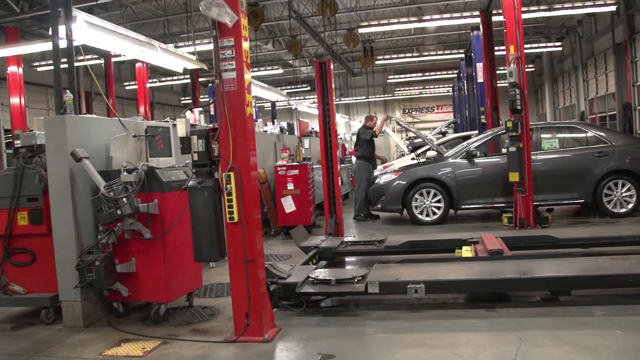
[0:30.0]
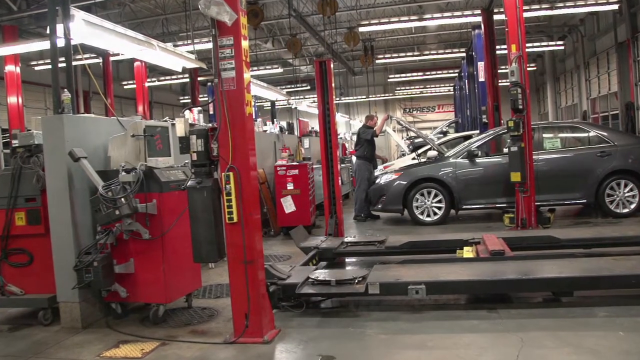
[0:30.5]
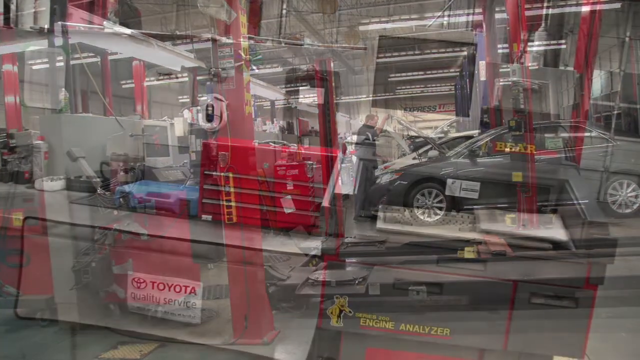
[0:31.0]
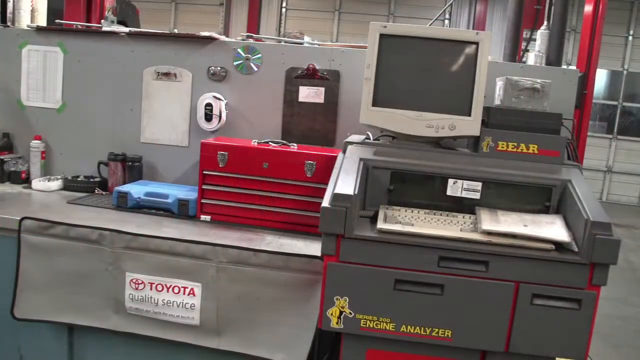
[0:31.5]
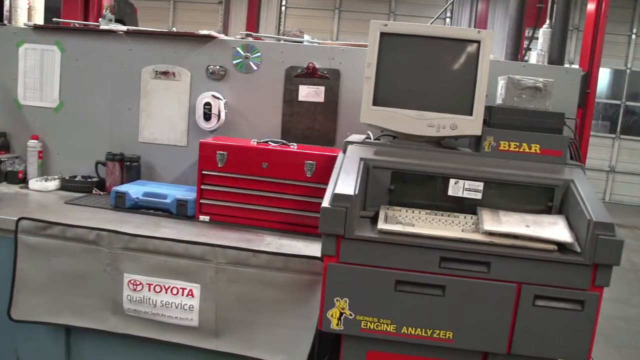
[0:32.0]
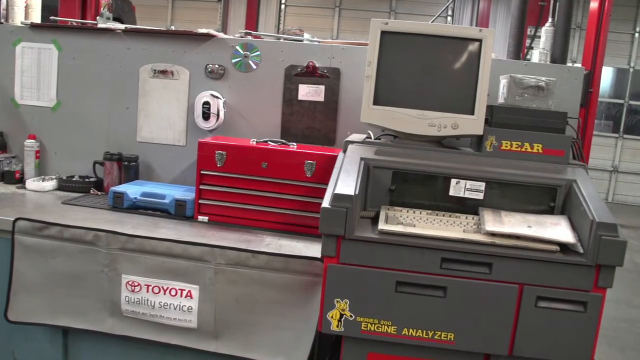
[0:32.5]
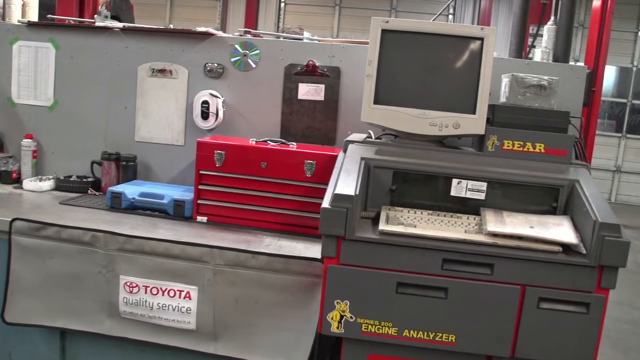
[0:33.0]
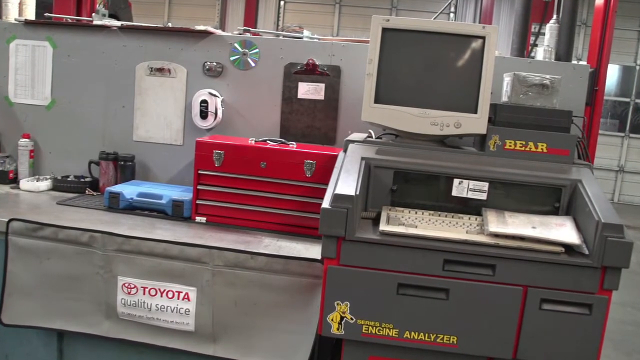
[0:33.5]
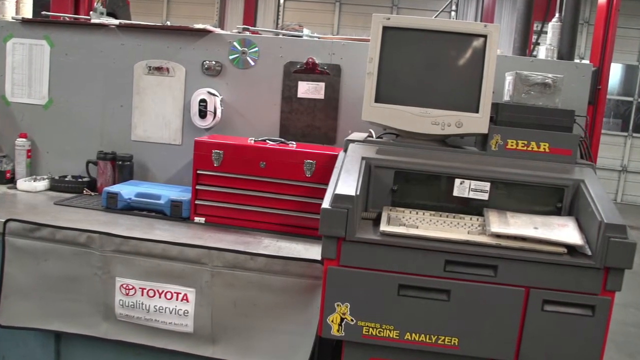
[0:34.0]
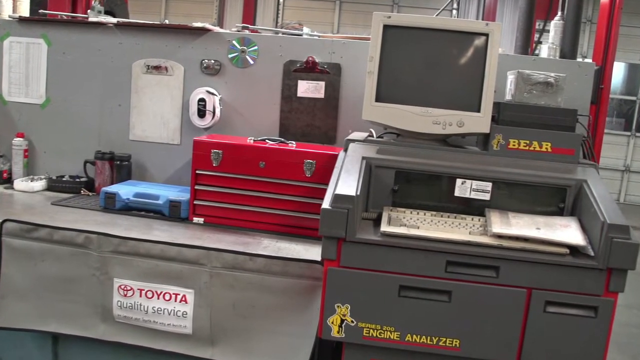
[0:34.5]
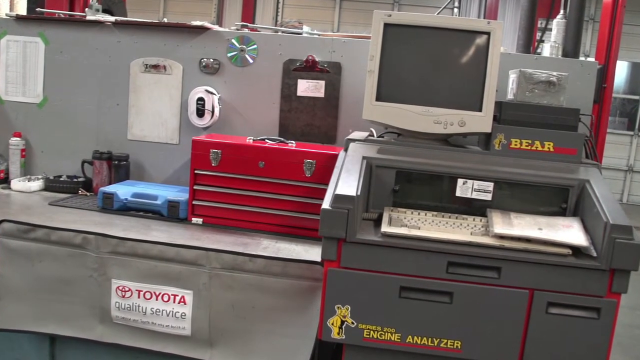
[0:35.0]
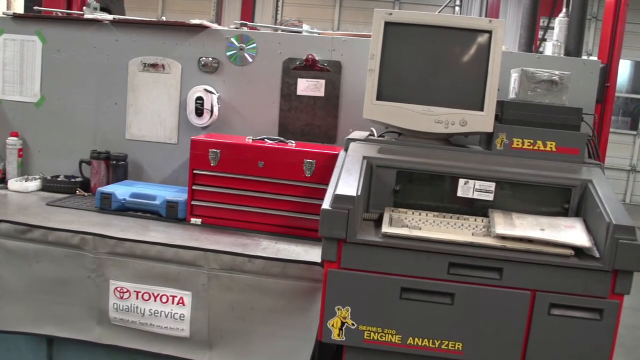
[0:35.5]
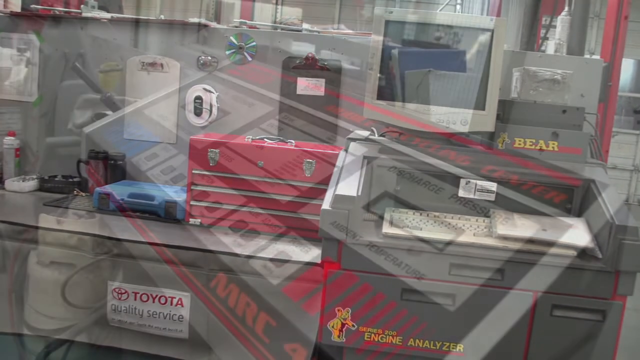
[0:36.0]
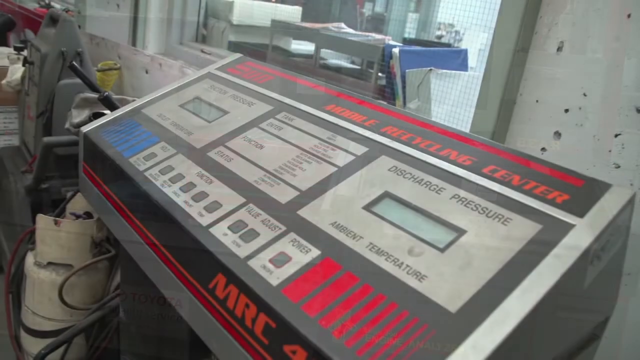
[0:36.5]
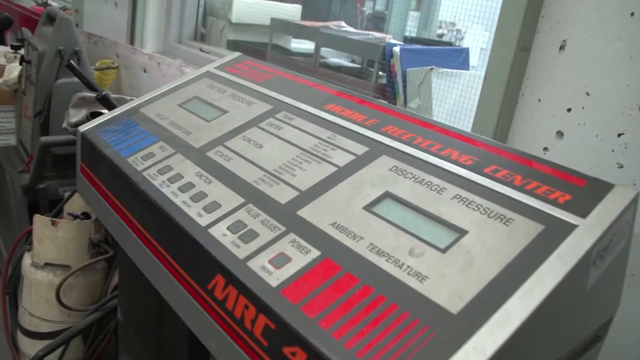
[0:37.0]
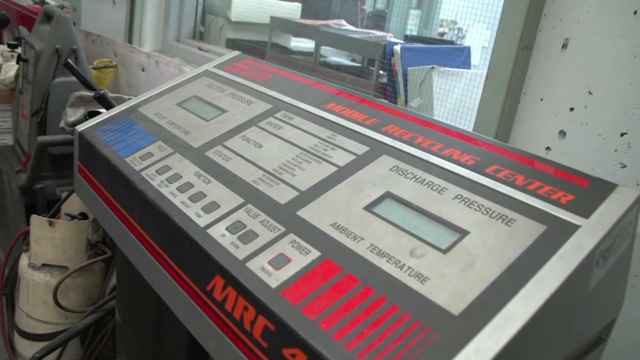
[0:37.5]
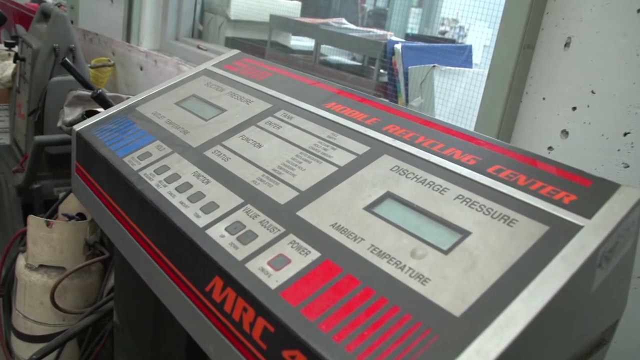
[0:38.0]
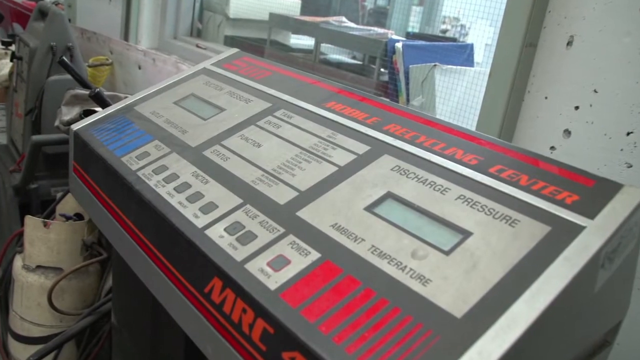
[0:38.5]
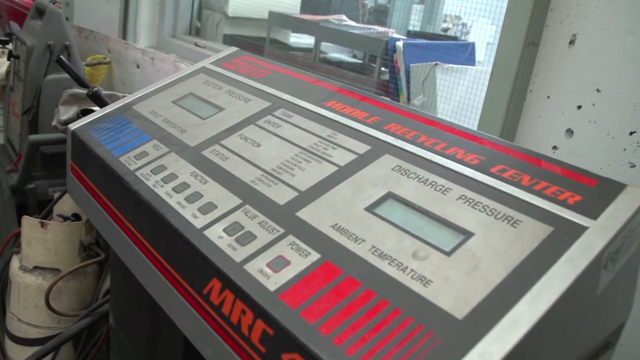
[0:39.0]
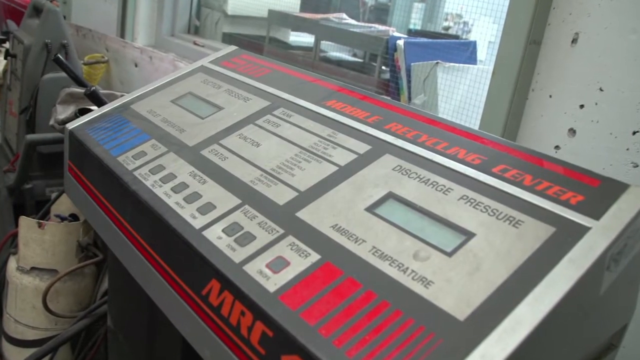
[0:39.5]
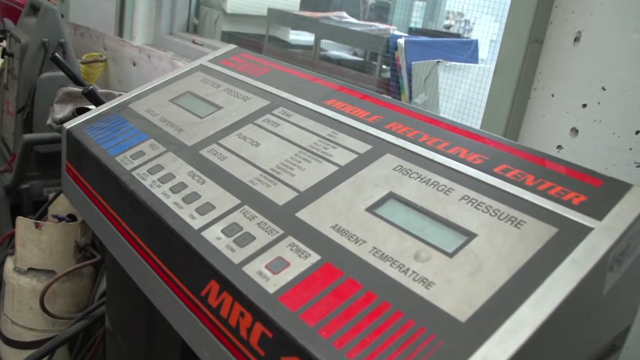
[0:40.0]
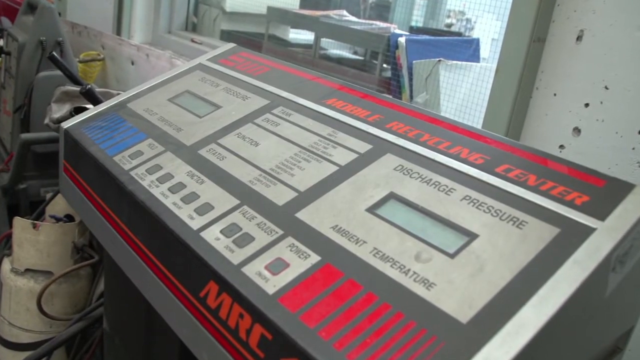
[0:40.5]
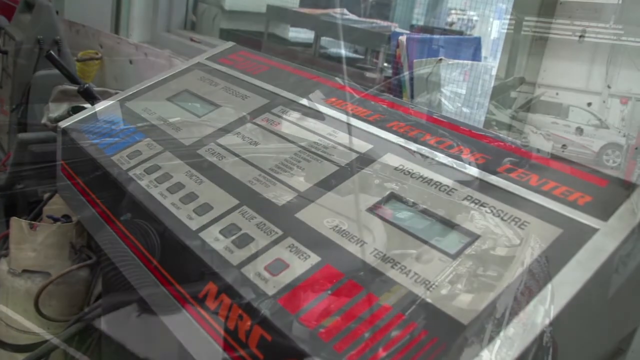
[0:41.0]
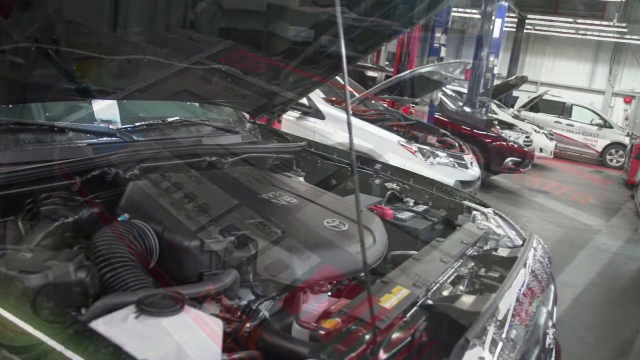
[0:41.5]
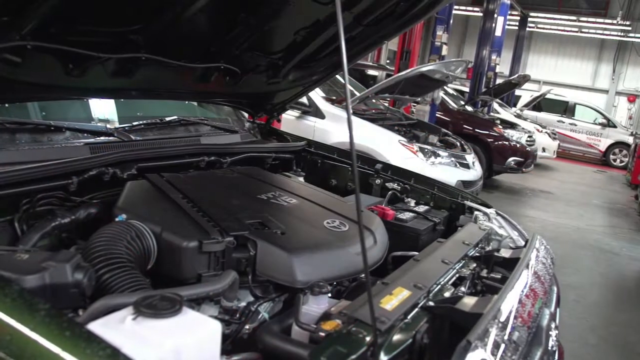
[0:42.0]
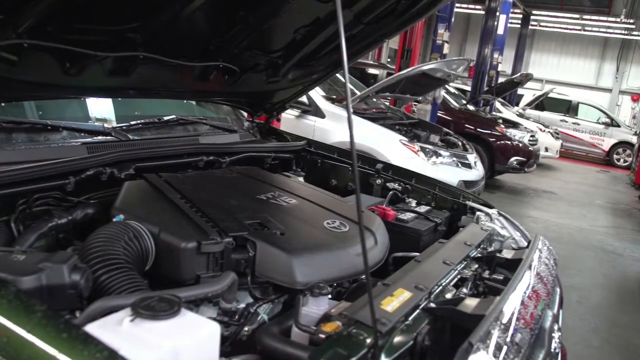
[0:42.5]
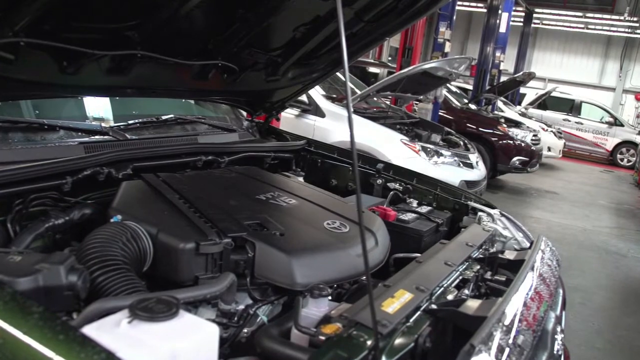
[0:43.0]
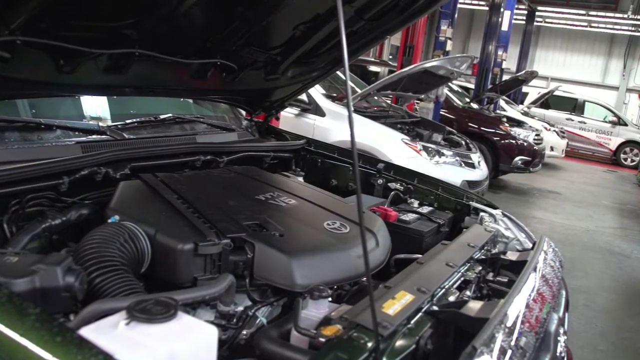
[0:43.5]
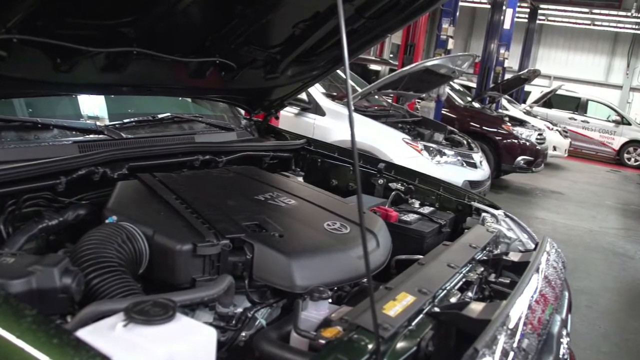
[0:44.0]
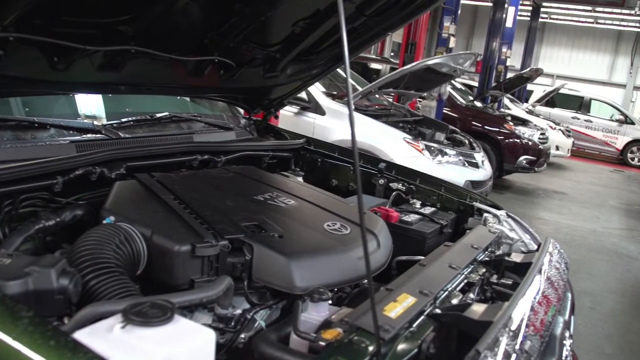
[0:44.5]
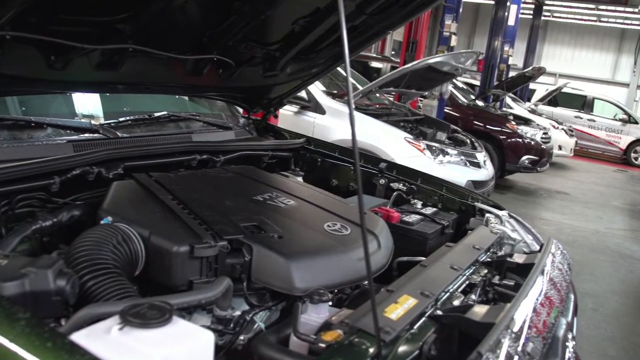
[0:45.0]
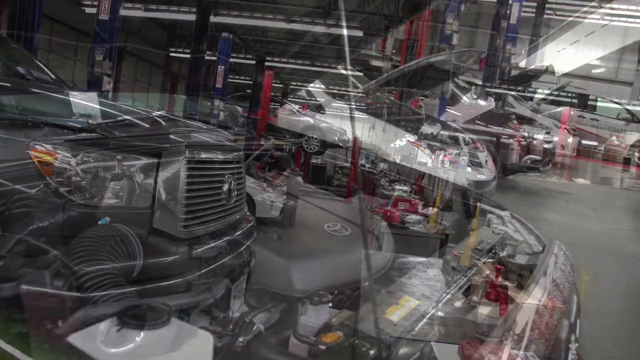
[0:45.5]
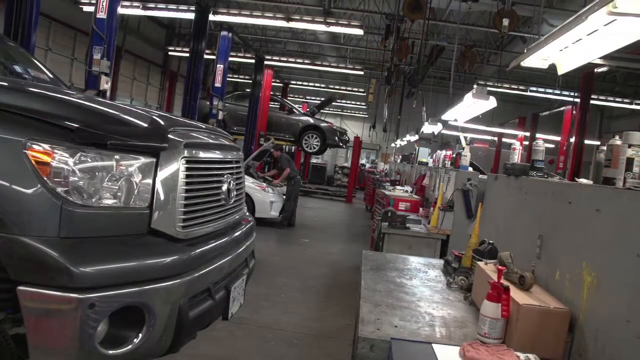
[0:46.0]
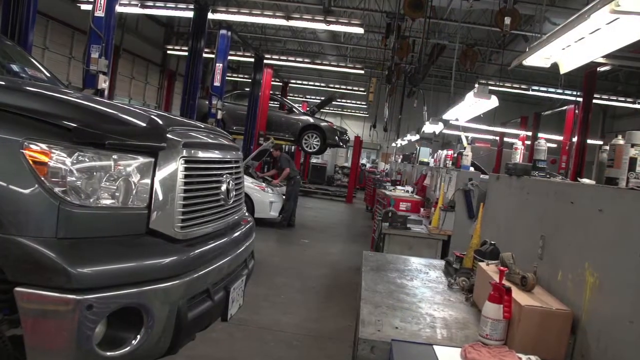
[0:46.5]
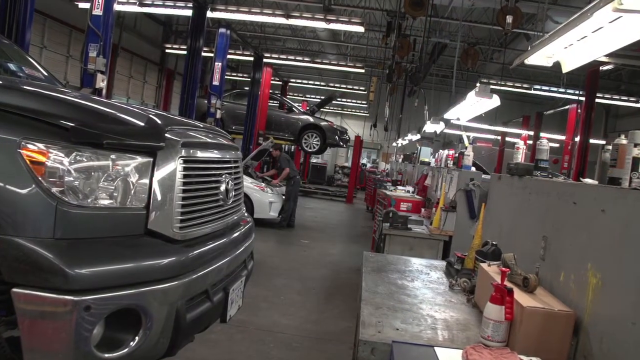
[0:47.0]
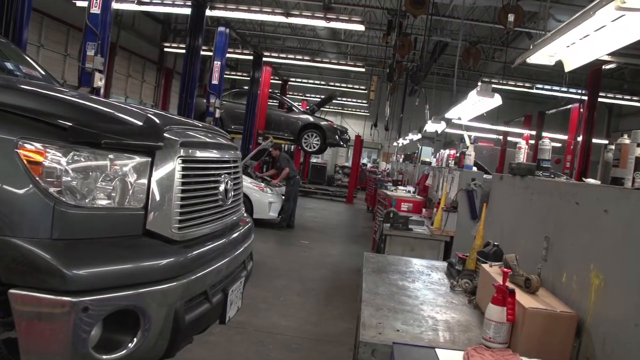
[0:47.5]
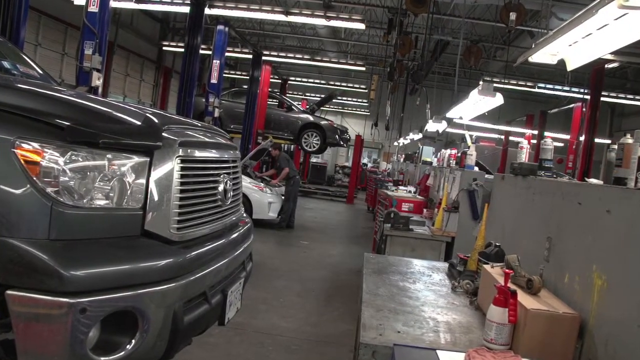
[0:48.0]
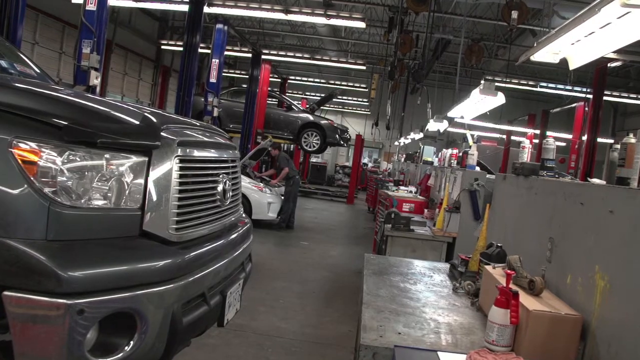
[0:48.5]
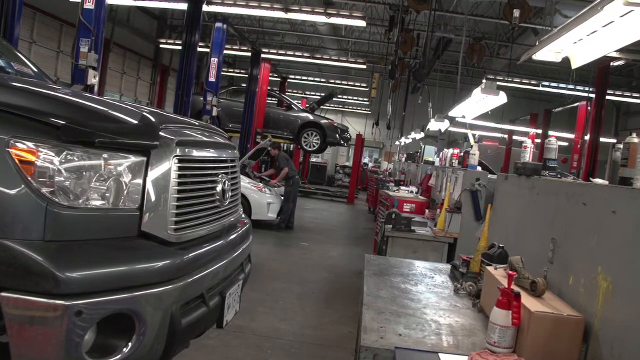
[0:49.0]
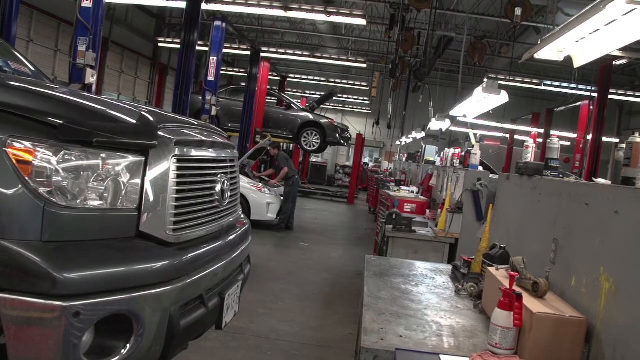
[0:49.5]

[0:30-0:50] A wide view shows the inside of the car repair shop. Numerous red pillars run throughout the shop, holding up the ceiling and separating each work area for individual cars. A man wearing a shirt and pants stands in front of a dark gray car that looks to be a Toyota Camry; he has opened the hood, and his hand is on the open hood as he looks inside the vehicle. Numerous lights overhead brighten the entire area. The video then cuts to a desk area, where a very old computer is on a table with a keyboard in front of it. Below it, the table reads "Toyota quality service." A red box is to the left of the computer, and a tinier blue box is to the left of that.